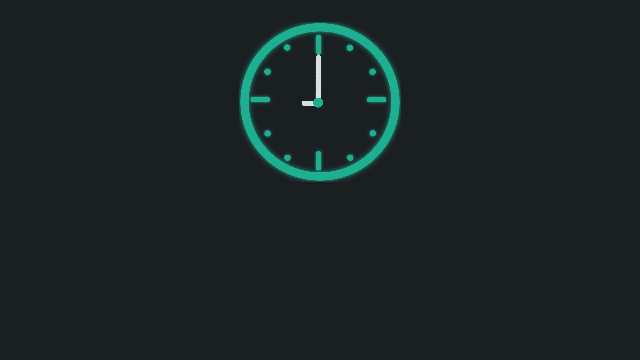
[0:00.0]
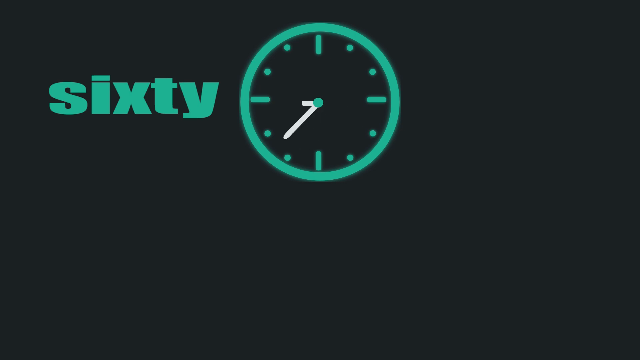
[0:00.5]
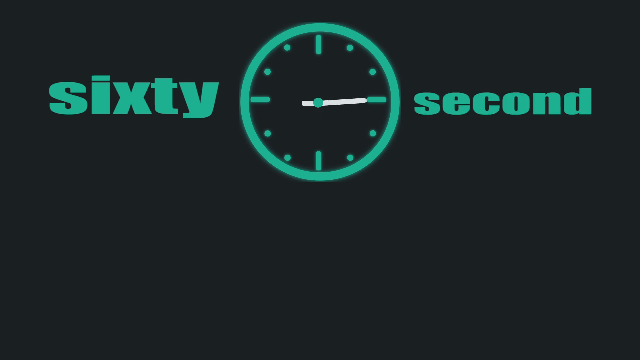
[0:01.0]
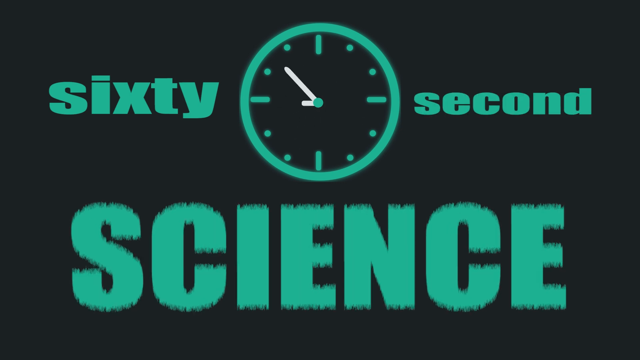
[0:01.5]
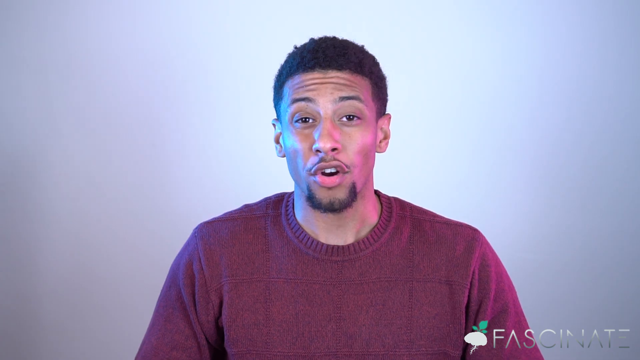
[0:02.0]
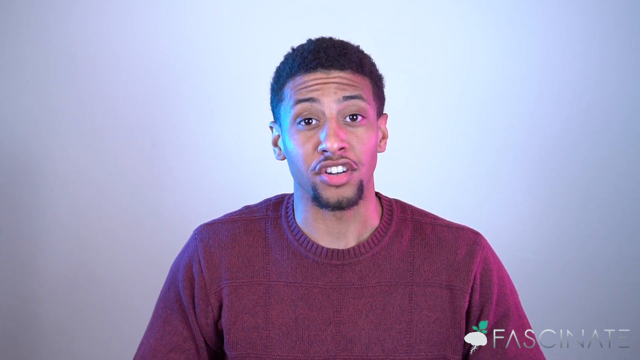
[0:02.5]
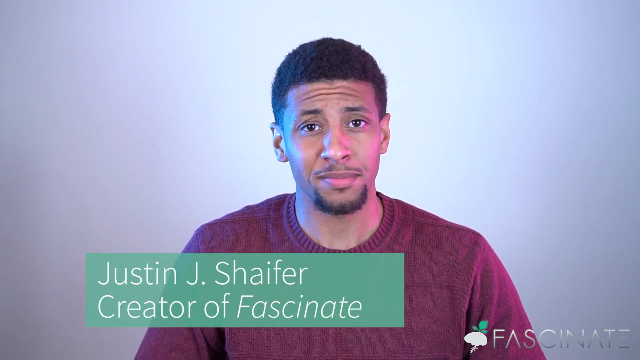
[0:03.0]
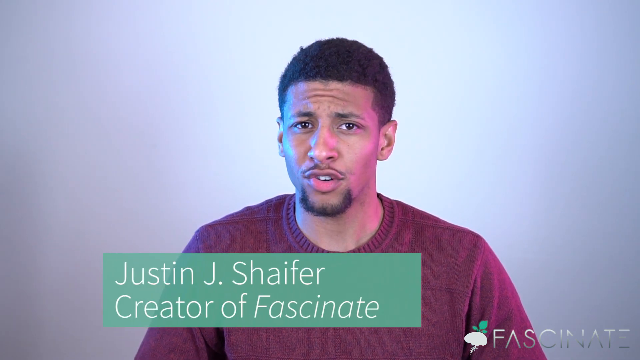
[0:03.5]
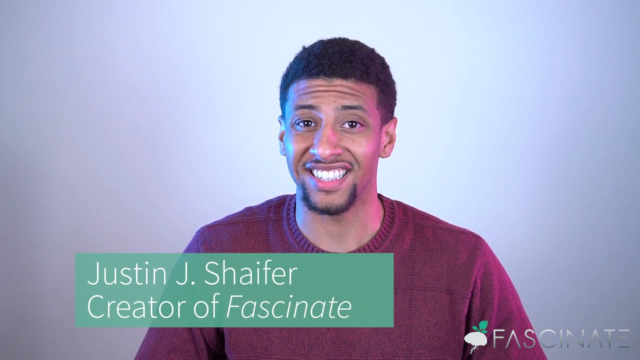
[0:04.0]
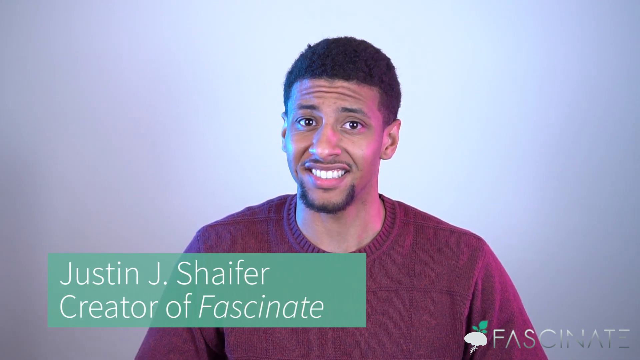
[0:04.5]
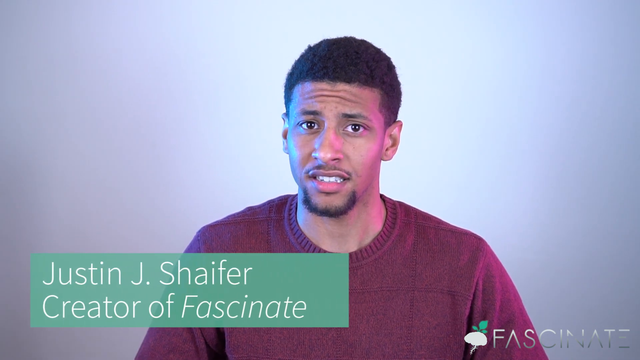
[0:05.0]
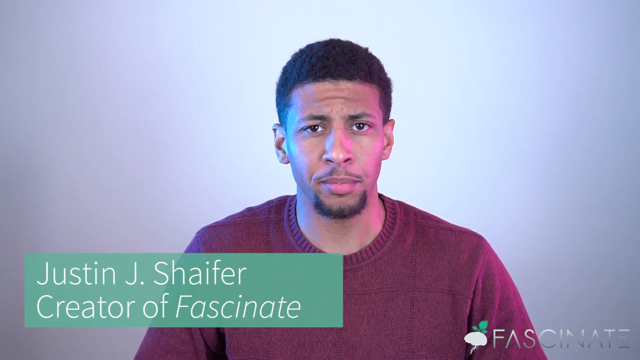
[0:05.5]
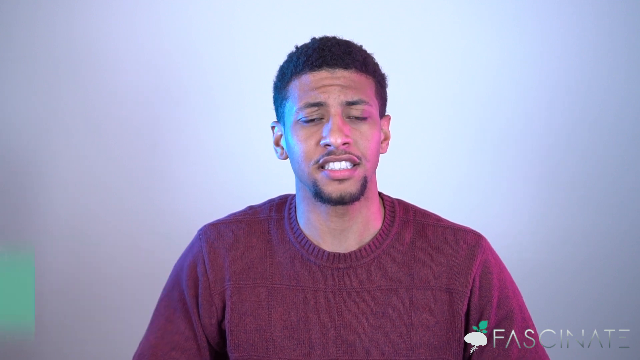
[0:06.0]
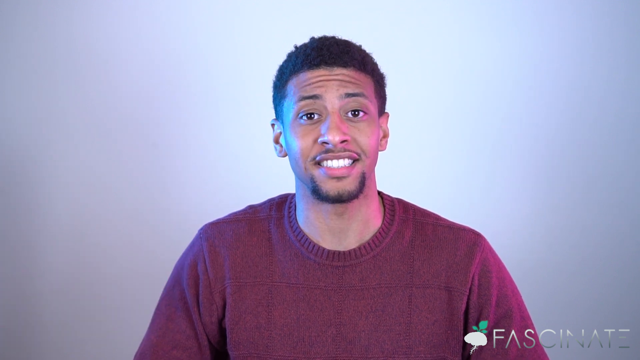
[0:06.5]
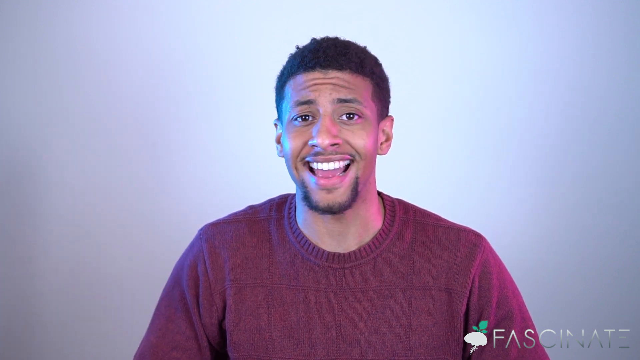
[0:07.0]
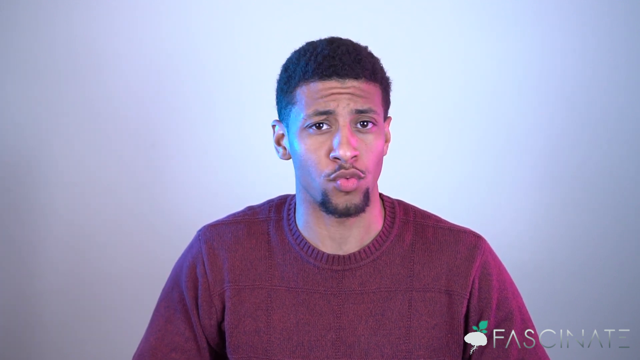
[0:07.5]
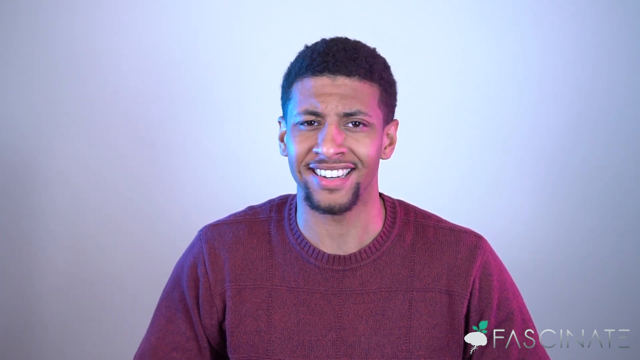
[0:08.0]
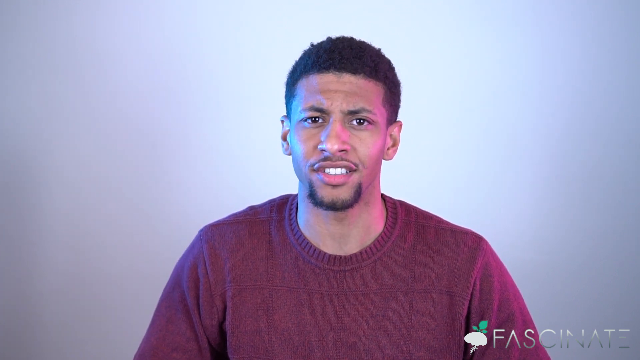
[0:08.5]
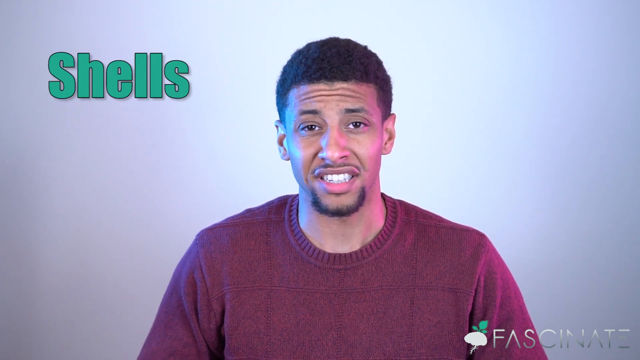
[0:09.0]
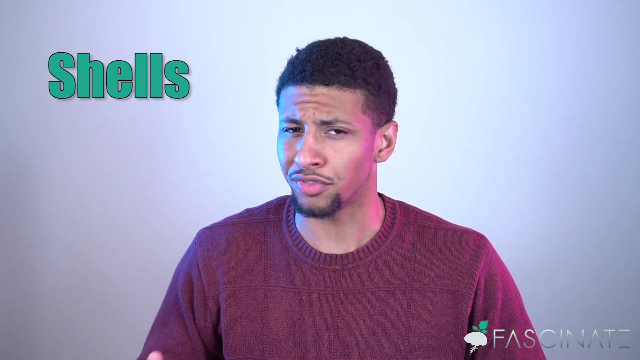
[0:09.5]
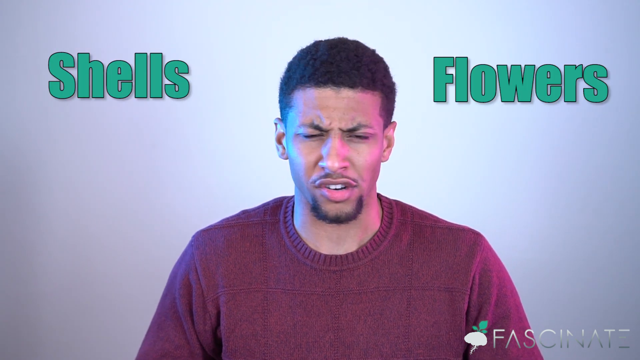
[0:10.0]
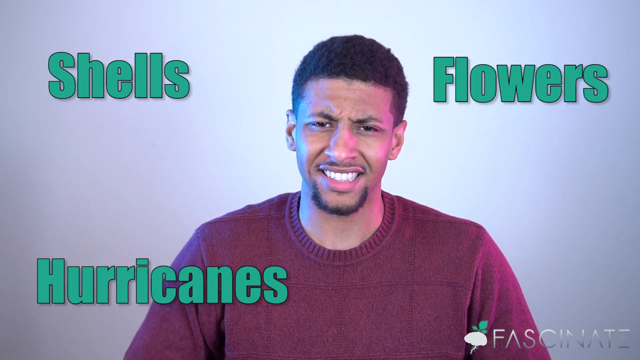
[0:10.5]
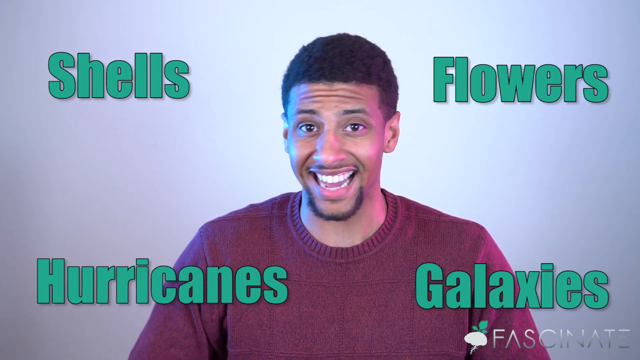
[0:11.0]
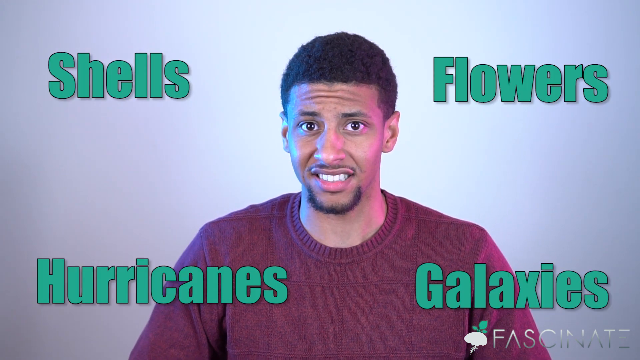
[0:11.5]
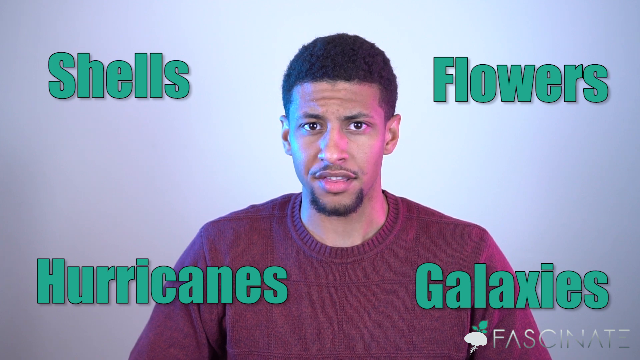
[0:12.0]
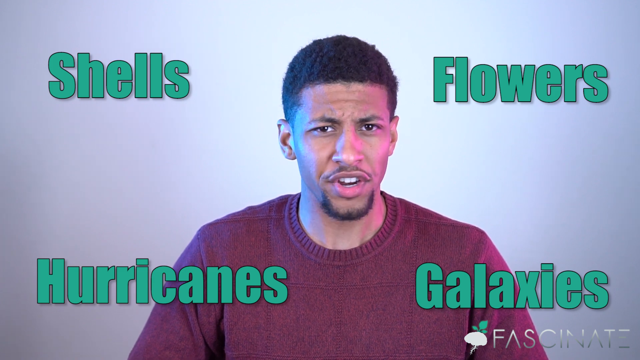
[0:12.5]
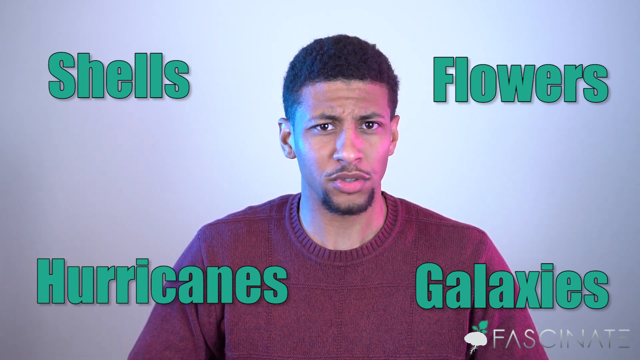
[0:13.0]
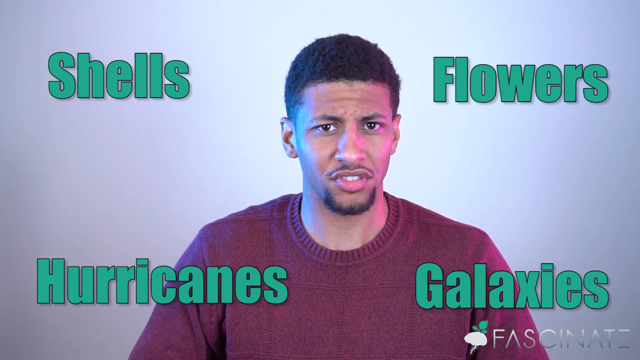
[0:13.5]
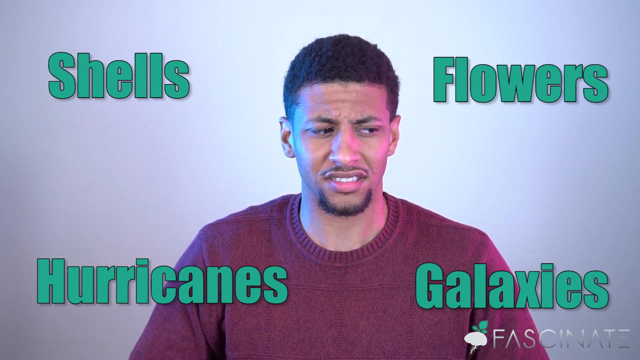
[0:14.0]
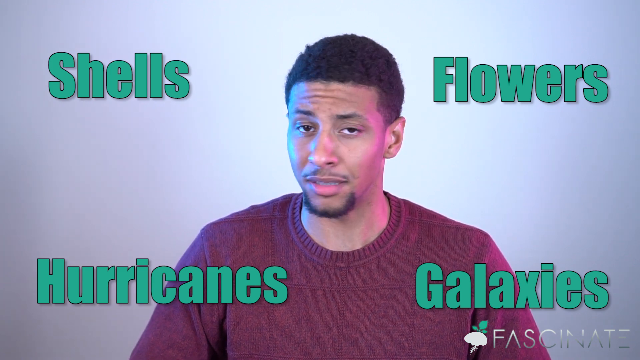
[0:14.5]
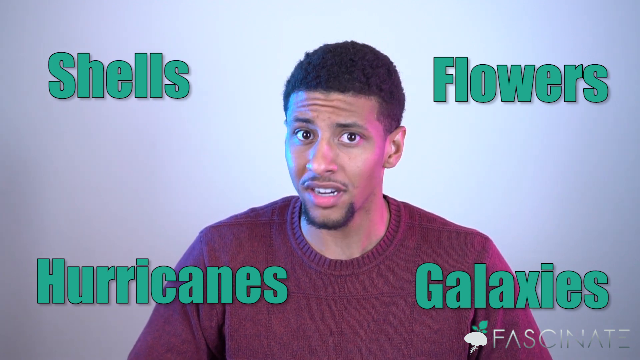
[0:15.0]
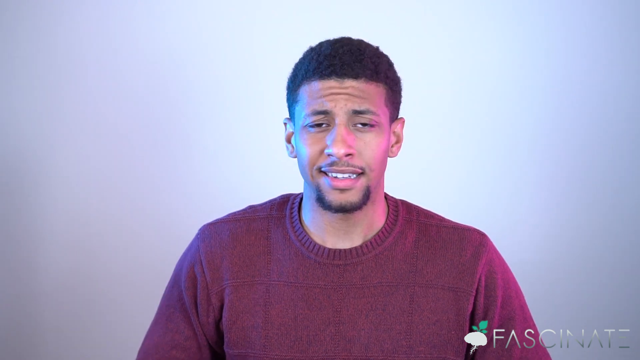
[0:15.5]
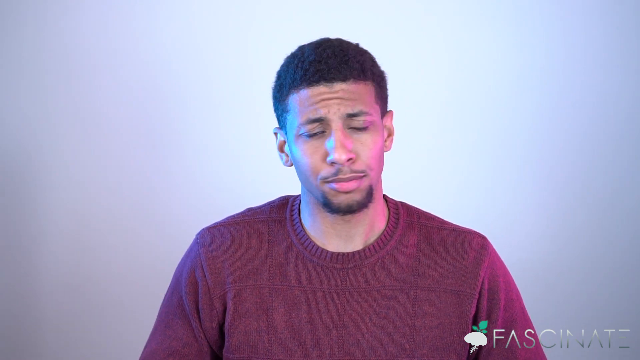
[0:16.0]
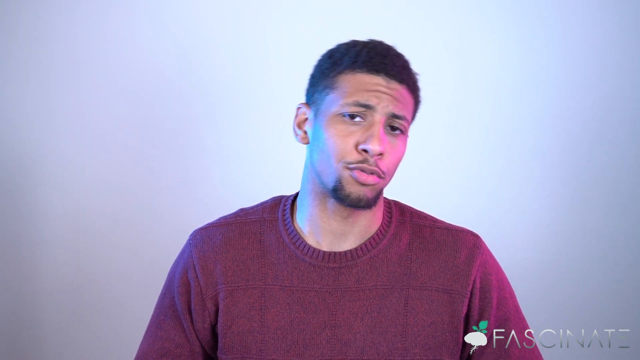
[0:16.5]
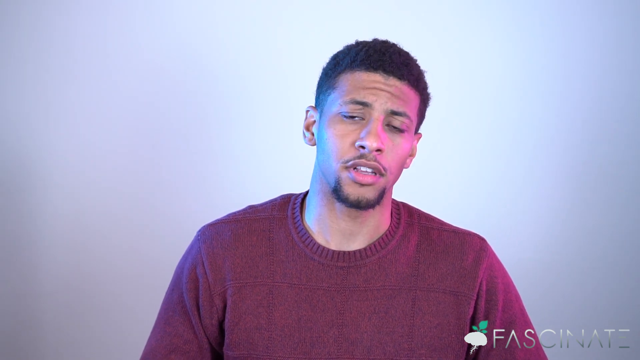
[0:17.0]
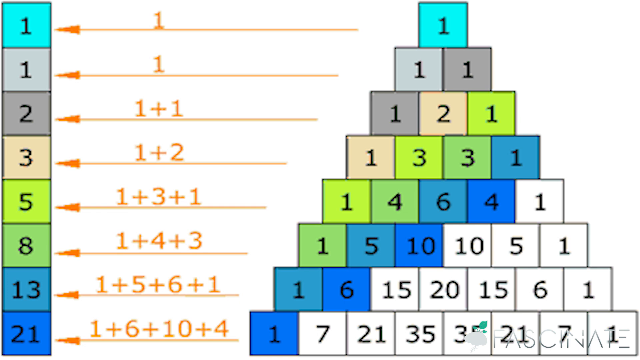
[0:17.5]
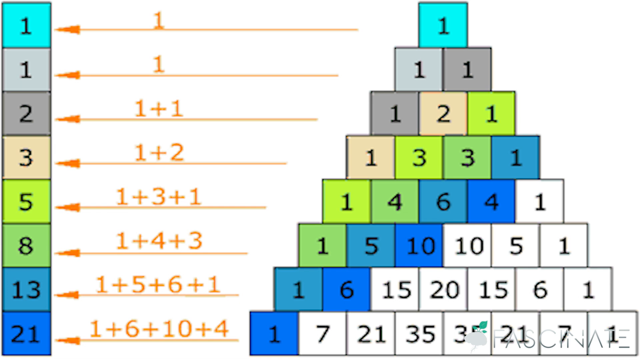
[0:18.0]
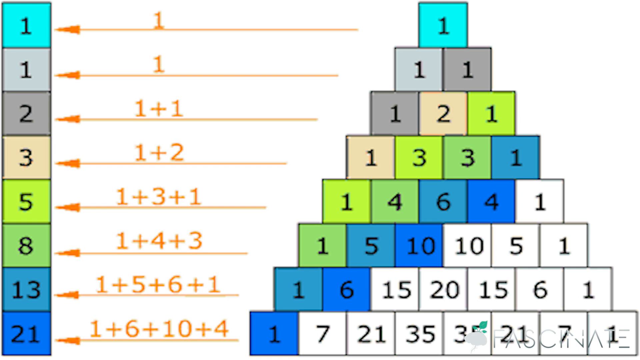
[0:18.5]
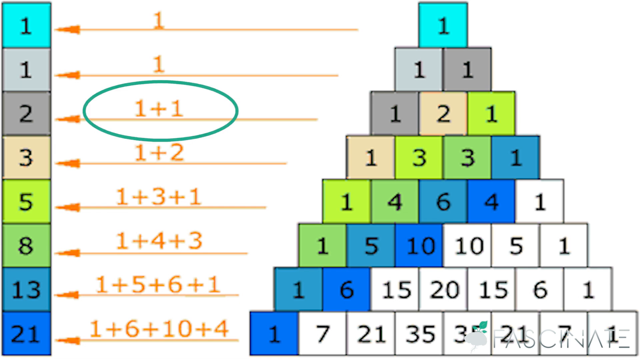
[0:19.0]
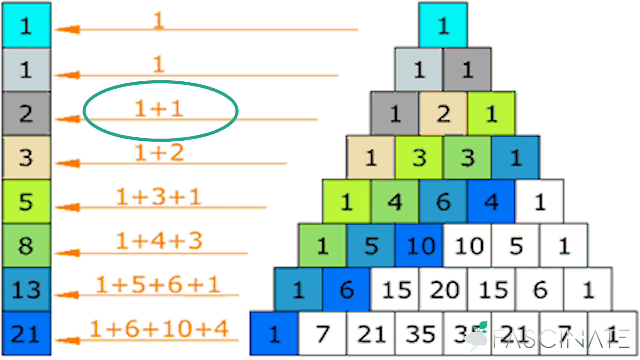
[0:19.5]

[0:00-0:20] A green clock icon appears on a black background, its minute hand spinning rapidly clockwise. Then "sixty second SCIENCE" appears on the screen in the same green color. Next, a black man in a red sweater is talking, and a light green text box appears with his name, "Justin J. Shaifer", and "Creator of Fascinate". The box moves back and forth from side to side, then disappears off the screen. The Fascinate logo is in the bottom right corner. An individual word of text then appears in each of the four corners: "Shells" in the top left, "Flowers" in the top right, "Hurricanes" in the bottom left, and "Galaxies" in the bottom right. As the man continues to talk, very animated in his body language, another screen pops up showing a pyramid of blocks with numbers in them on the right, apparently showing the Fibonnaci sequence. On the left of each layer of blocks are arrows pointing to a numbered block on the left side, with a formula or equation for how that number was arrived at. The "1+1" option then gets circled.